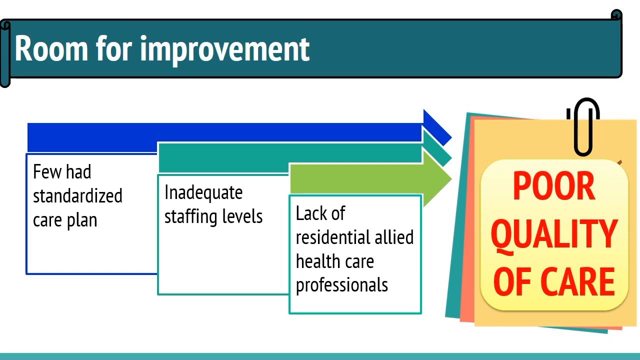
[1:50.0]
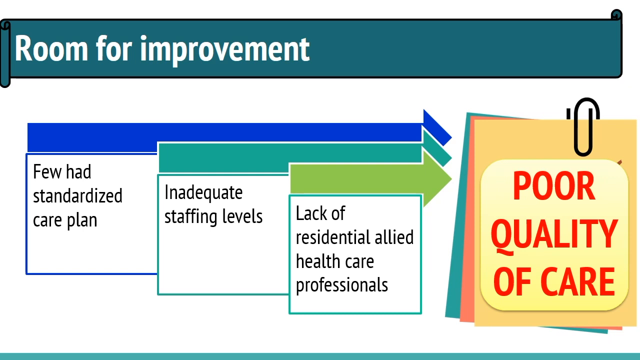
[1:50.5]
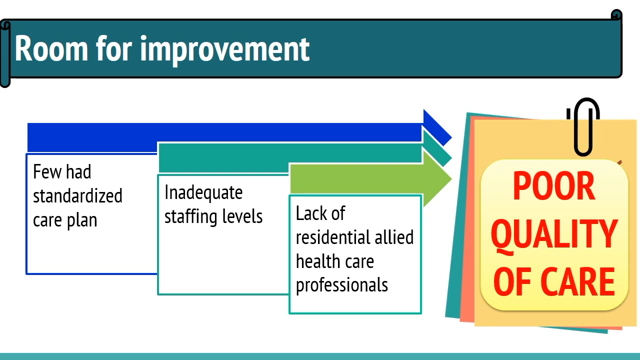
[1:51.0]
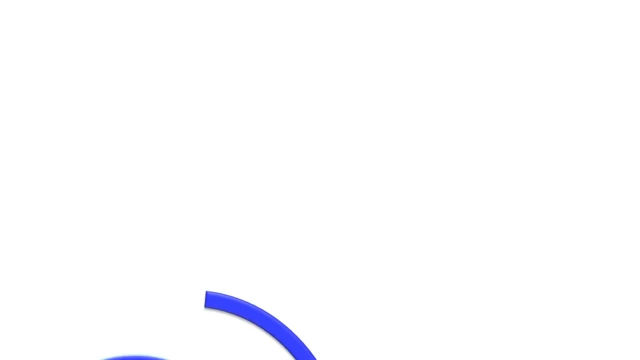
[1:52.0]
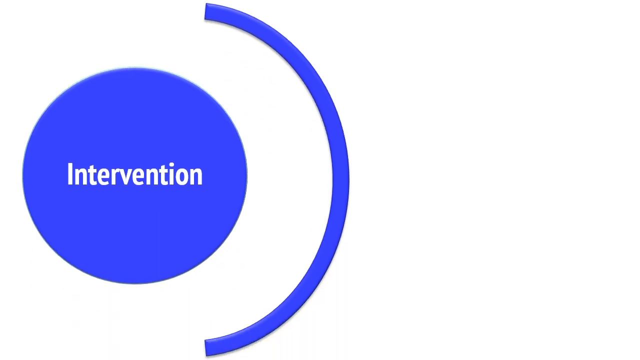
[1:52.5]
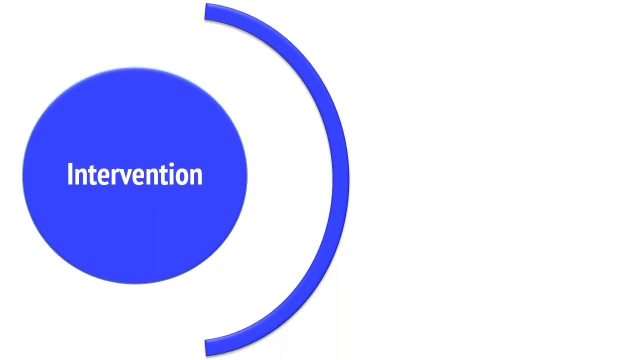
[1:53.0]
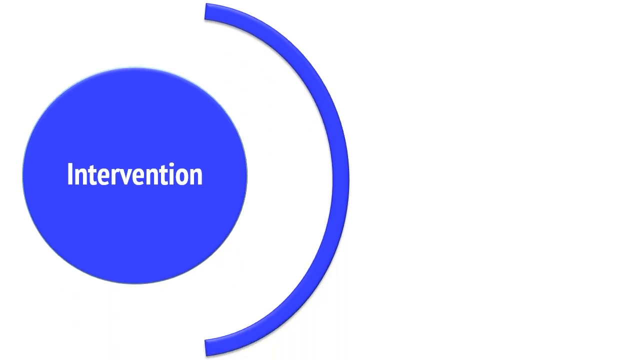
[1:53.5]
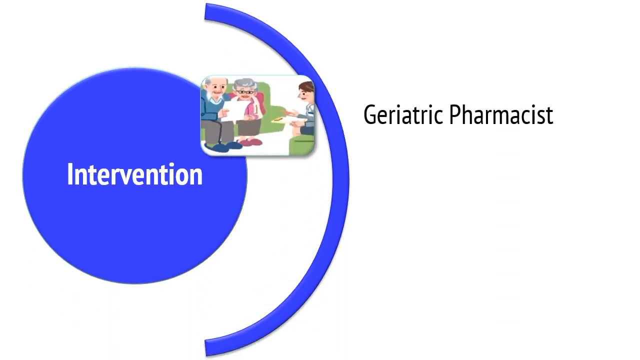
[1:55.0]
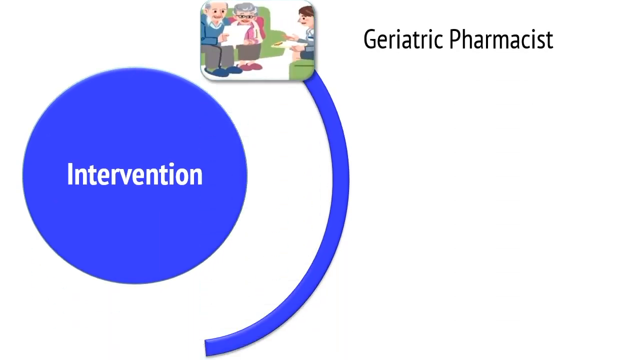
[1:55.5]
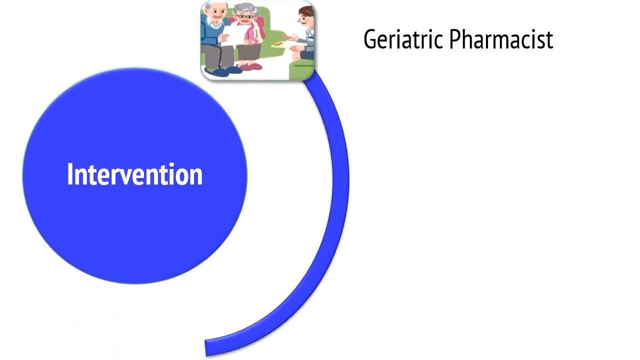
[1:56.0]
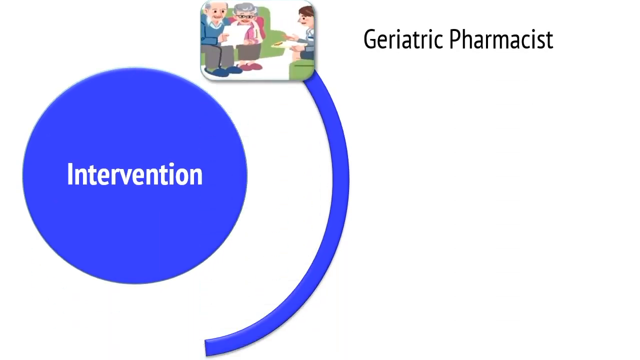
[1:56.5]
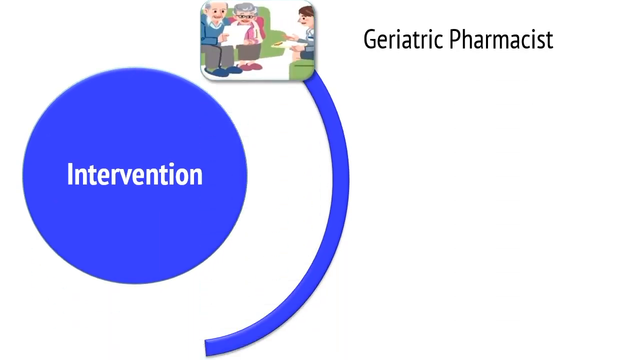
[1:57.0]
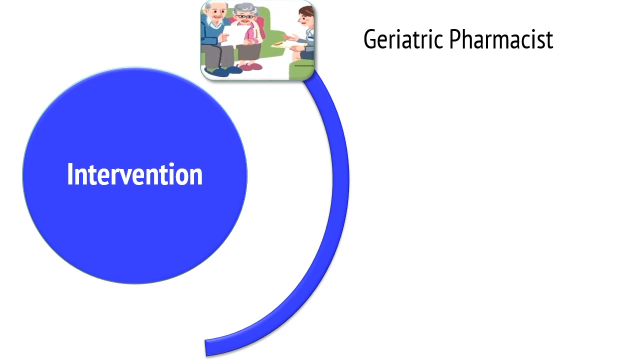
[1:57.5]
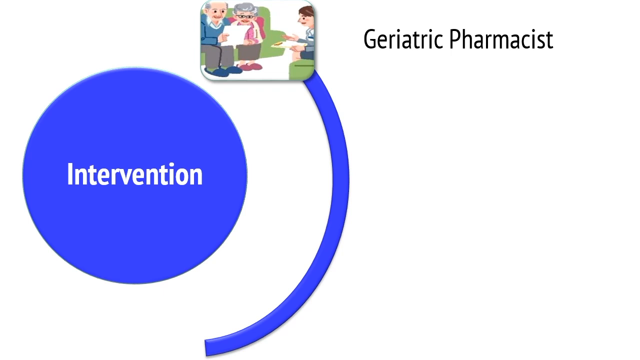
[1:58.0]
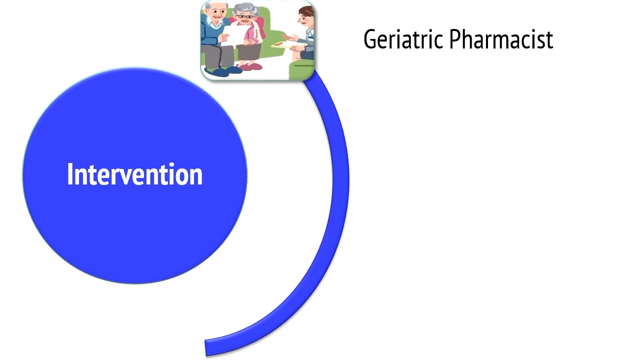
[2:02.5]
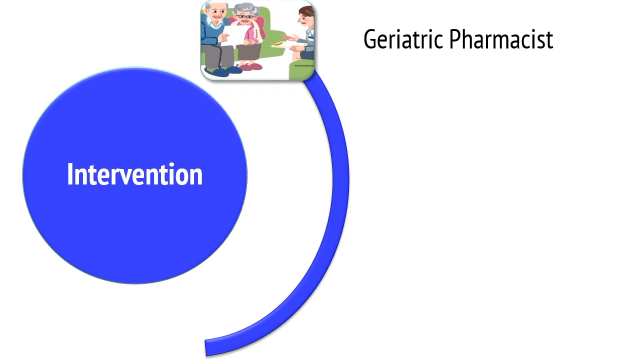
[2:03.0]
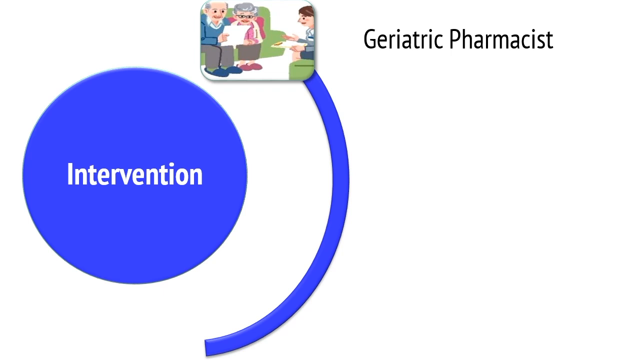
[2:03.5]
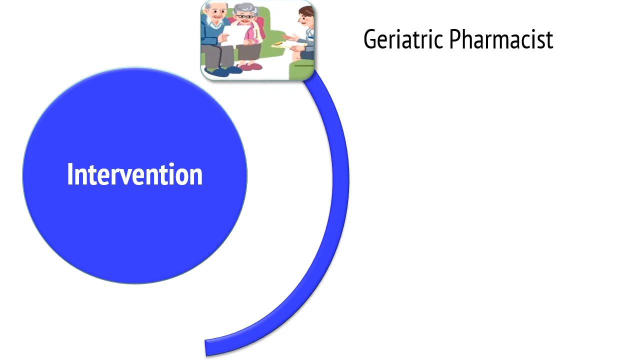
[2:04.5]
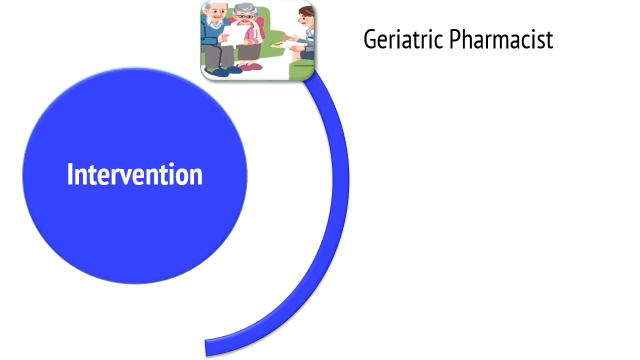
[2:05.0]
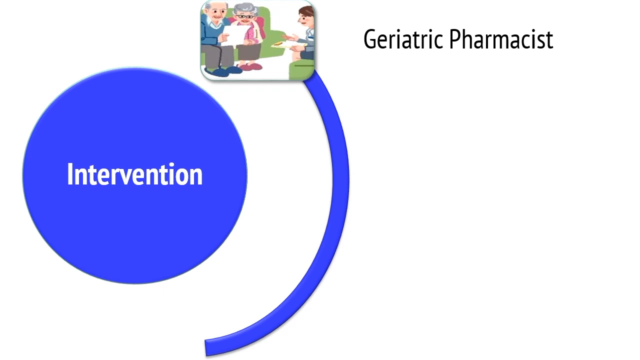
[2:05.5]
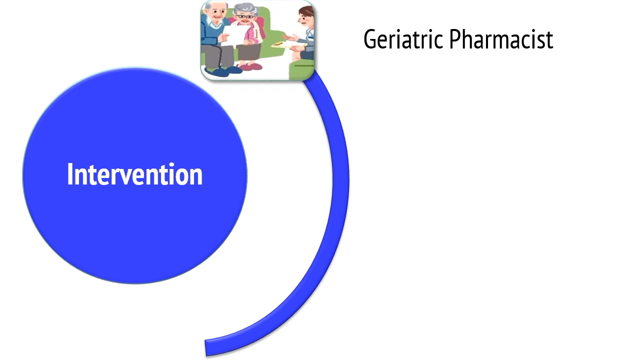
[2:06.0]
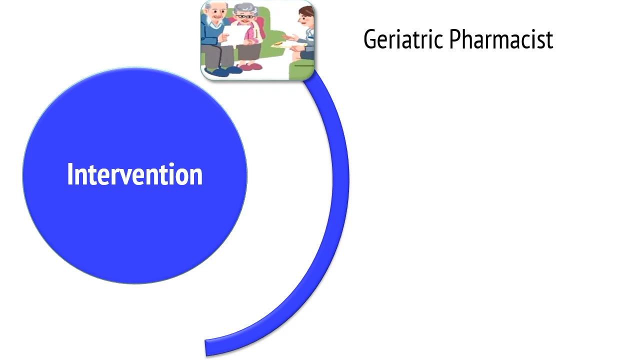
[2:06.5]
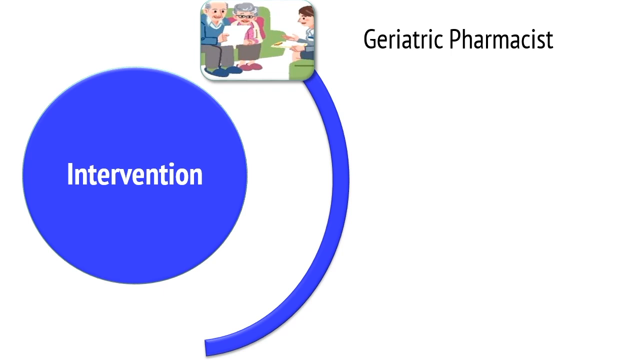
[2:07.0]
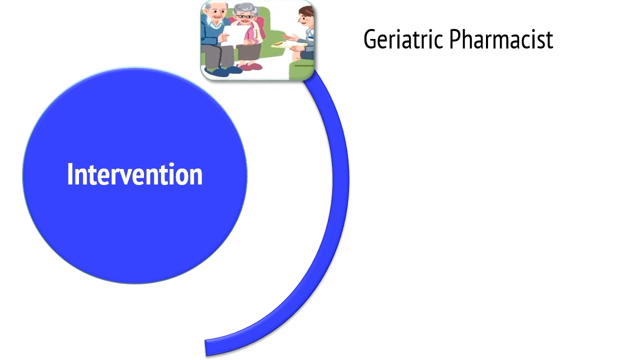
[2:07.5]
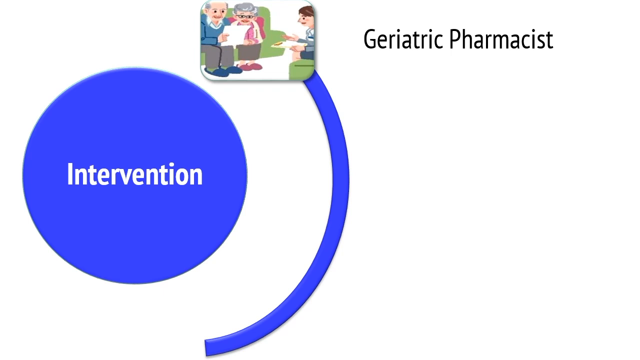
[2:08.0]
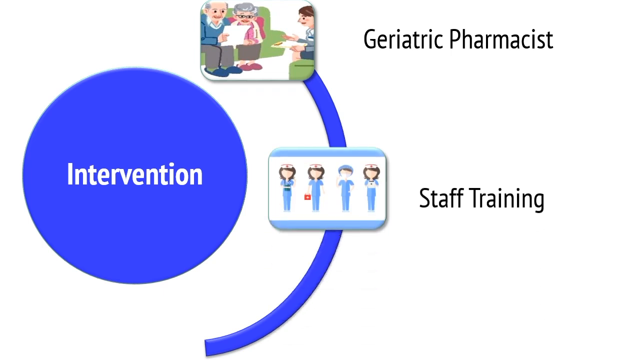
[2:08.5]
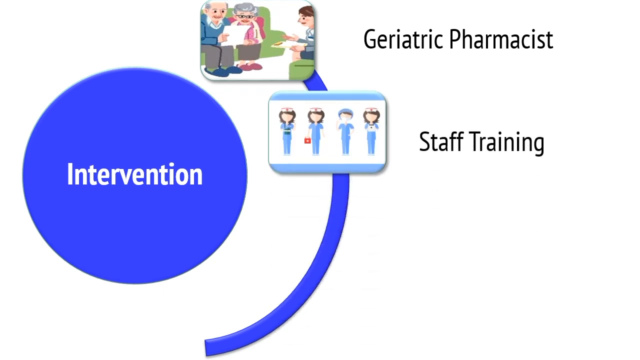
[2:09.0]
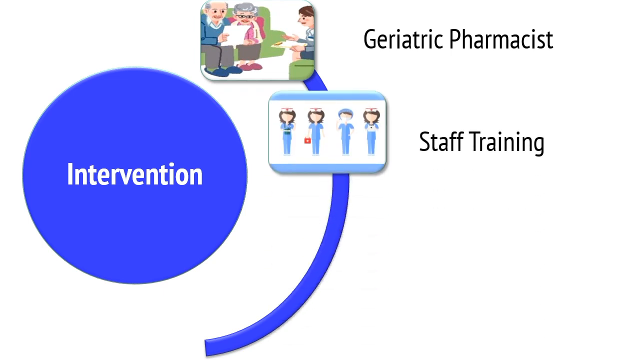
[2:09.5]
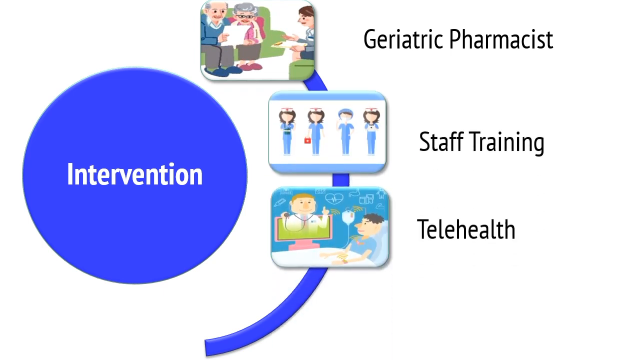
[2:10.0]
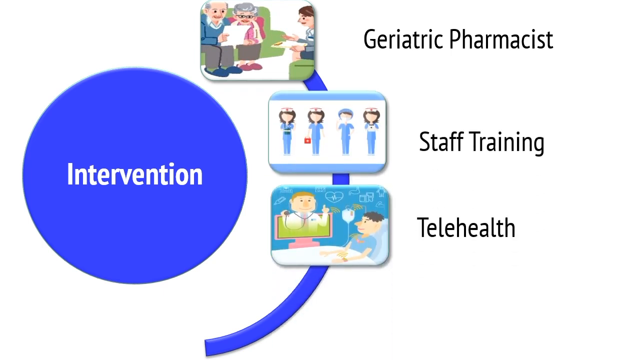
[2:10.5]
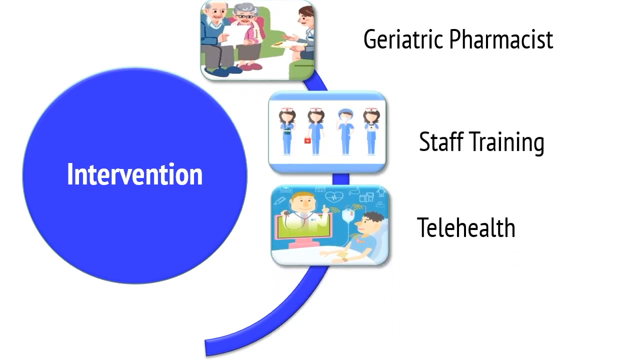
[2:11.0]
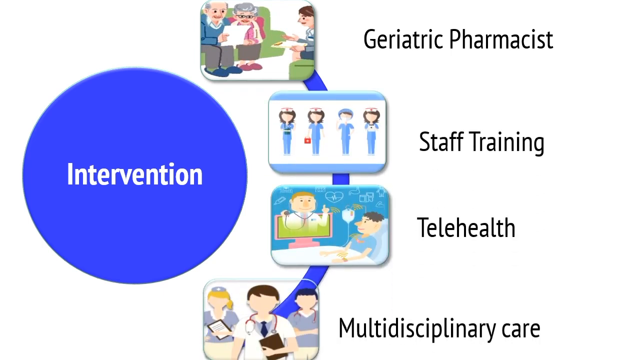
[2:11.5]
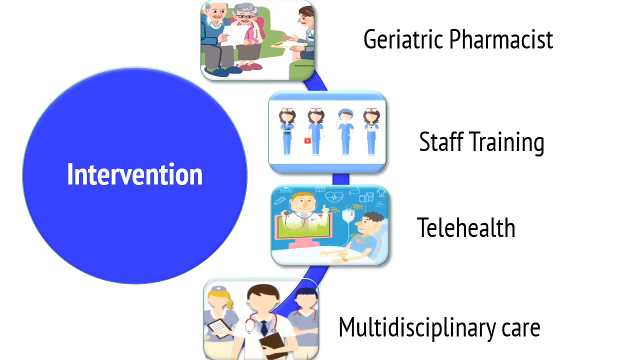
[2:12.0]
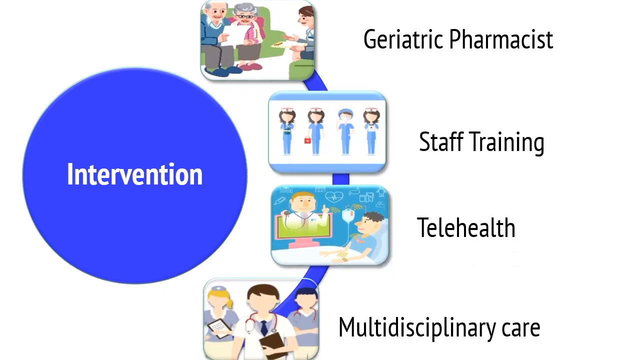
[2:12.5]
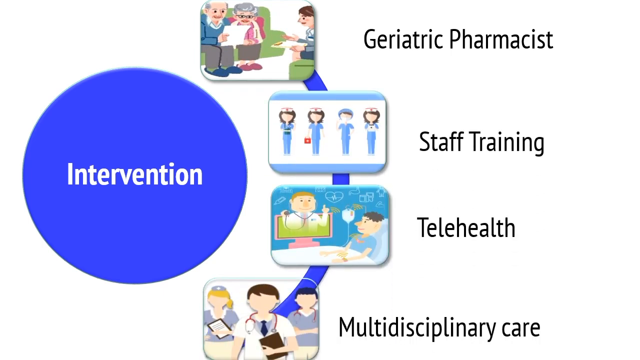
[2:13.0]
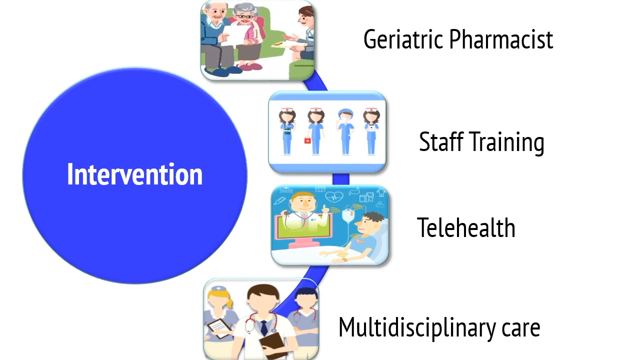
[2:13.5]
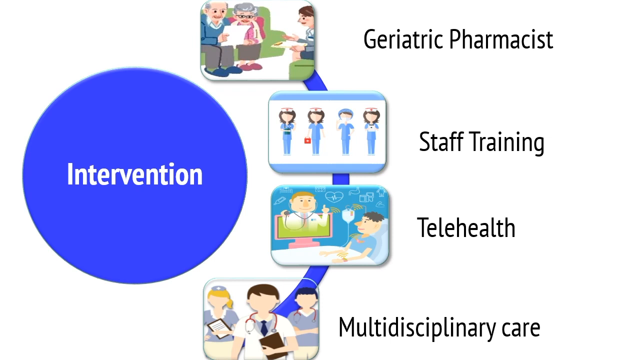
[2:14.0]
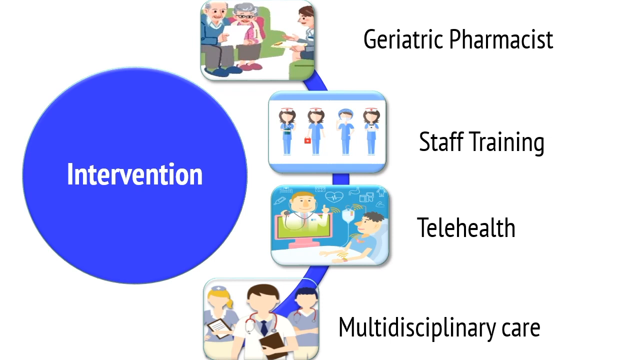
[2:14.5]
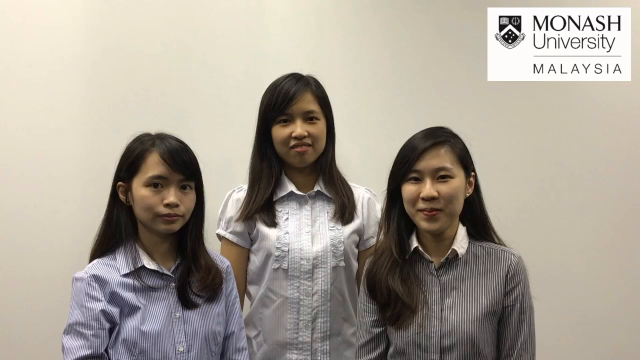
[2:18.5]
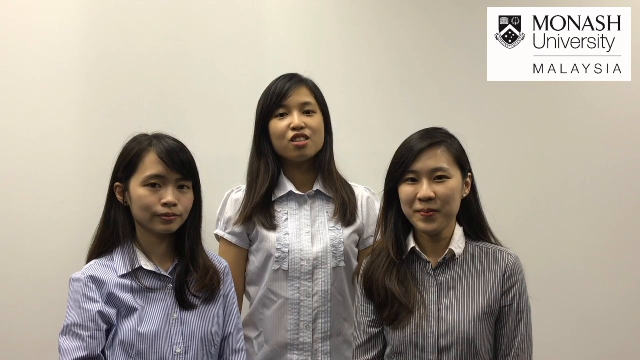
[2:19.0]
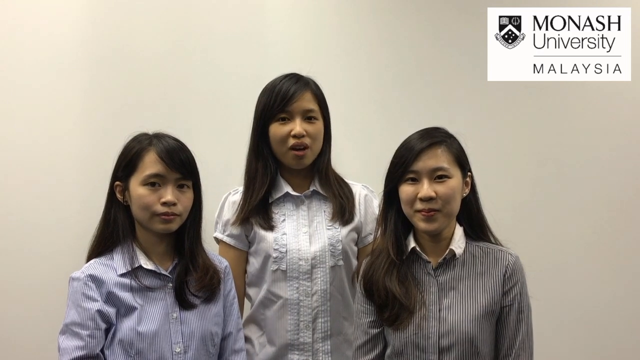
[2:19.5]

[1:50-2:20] The white background at the top shows the blue flag reading "room for improvement" and the three boxes with arrows reading "few had standardized care plan," "inadequate staffing levels" and "lack of residential allied healthcare professionals." To the right of them appear papers of different colors clipped together, with "poor quality of care" in large red letters on the front page. The next page shows a large blue circle surrounded by a blue semicircle, with "intervention" inside. A picture of a man and a woman standing outside, along with an elderly person, is labeled "geriatric pharmacist," followed by "staff training," "telehealth" and "multidisciplinary team." Then three women are shown talking.